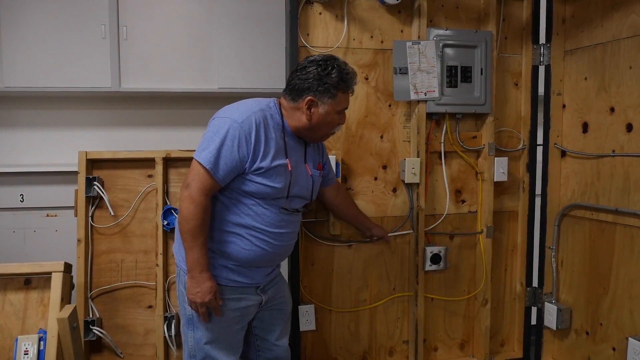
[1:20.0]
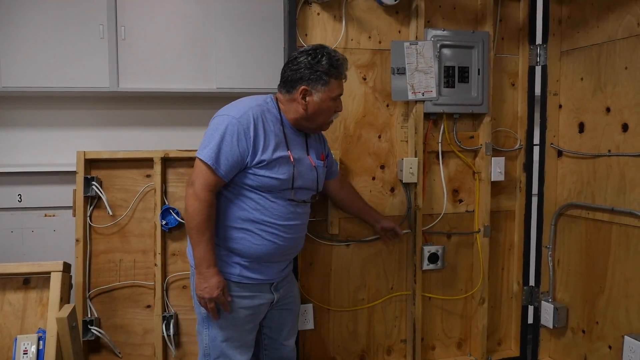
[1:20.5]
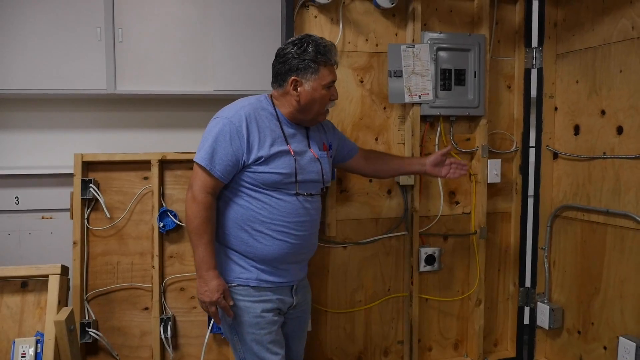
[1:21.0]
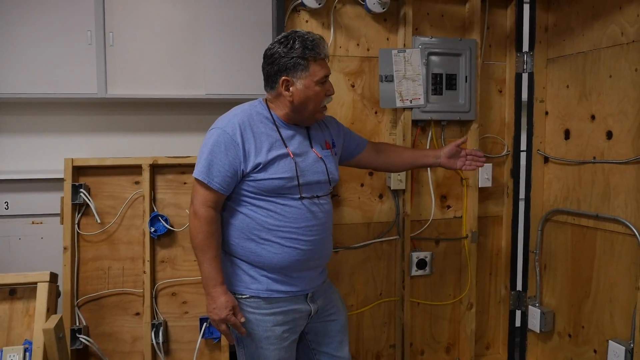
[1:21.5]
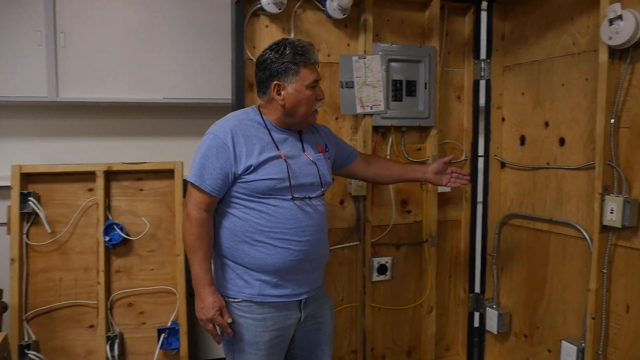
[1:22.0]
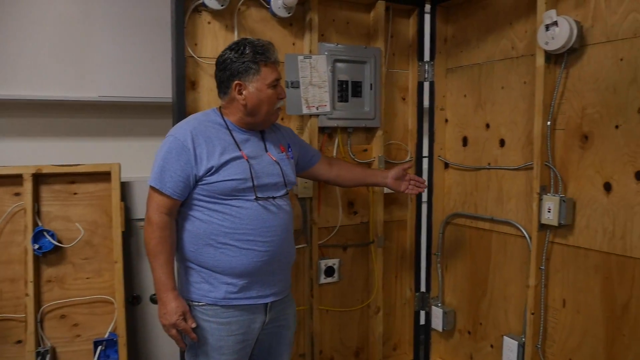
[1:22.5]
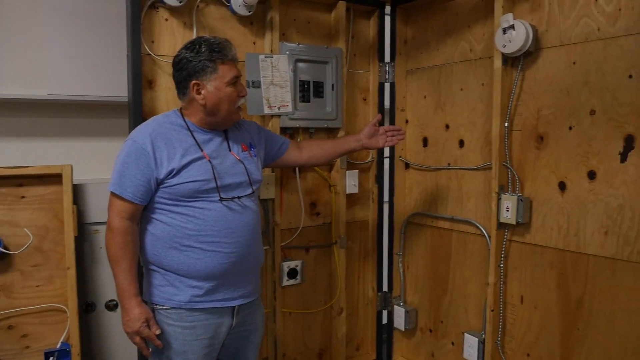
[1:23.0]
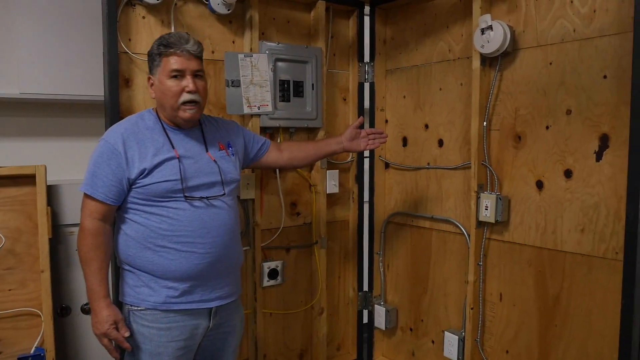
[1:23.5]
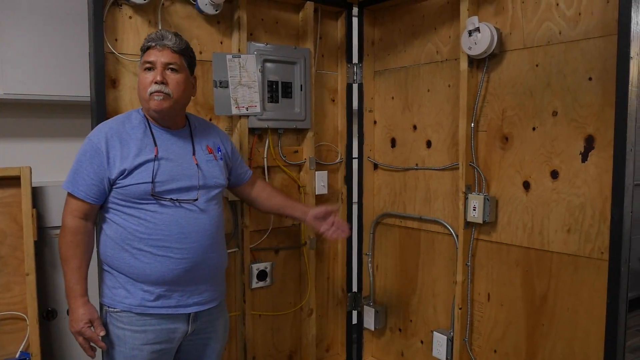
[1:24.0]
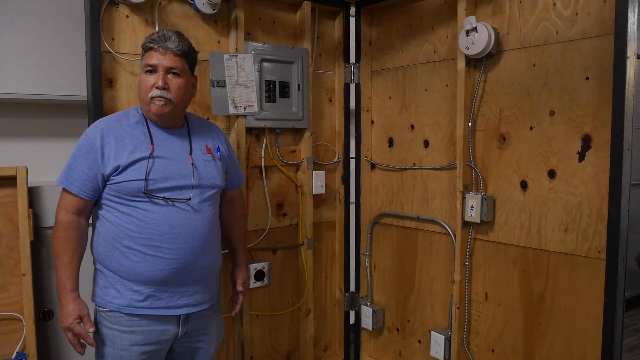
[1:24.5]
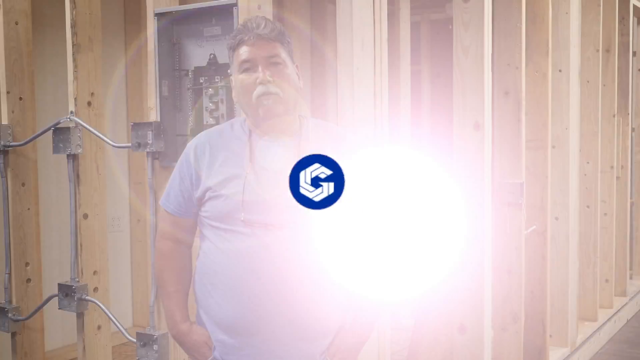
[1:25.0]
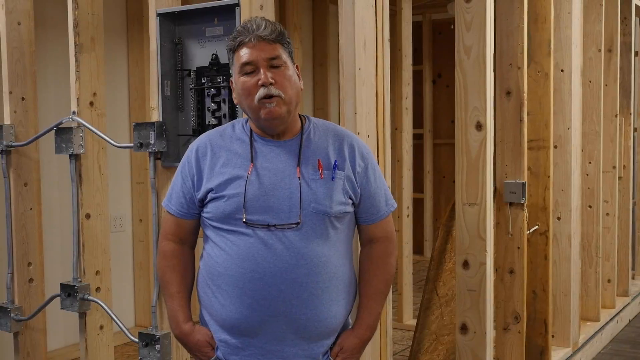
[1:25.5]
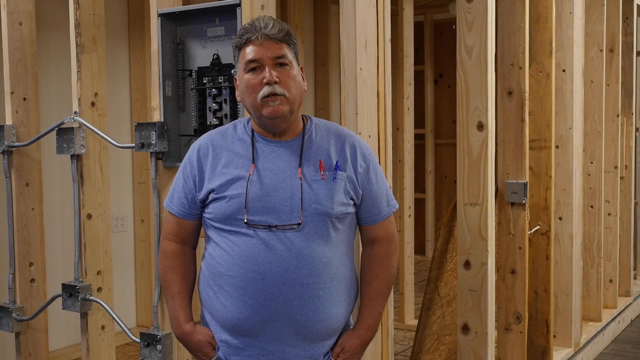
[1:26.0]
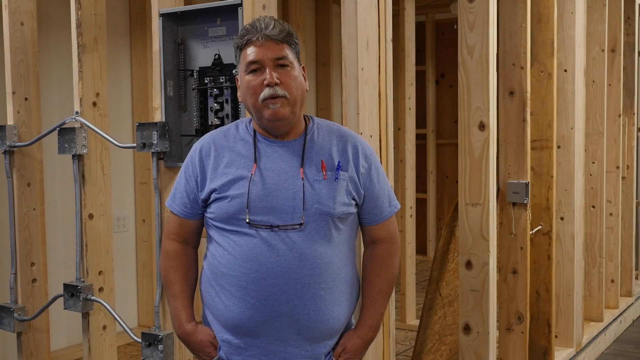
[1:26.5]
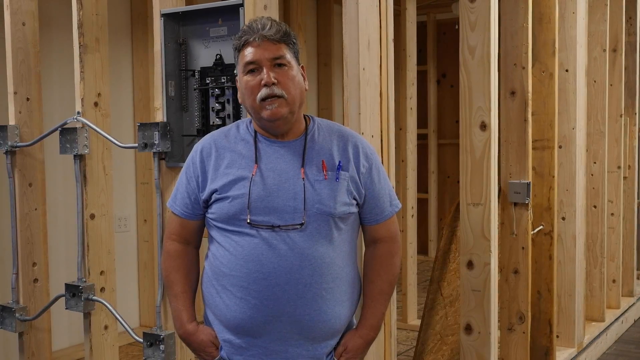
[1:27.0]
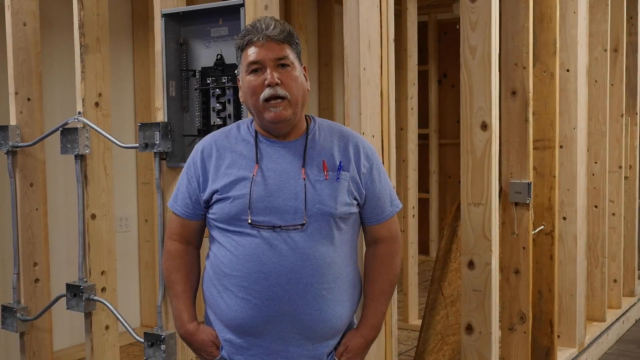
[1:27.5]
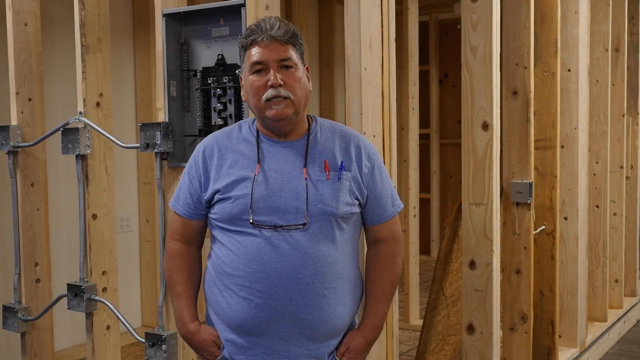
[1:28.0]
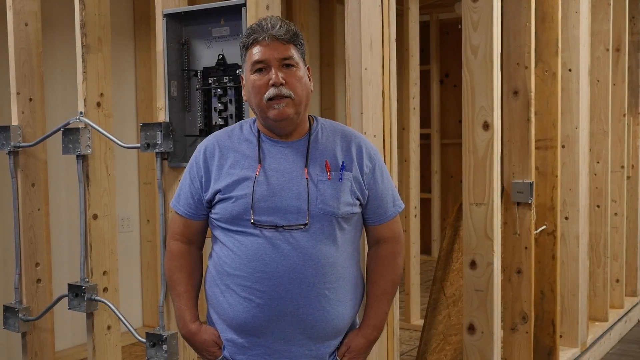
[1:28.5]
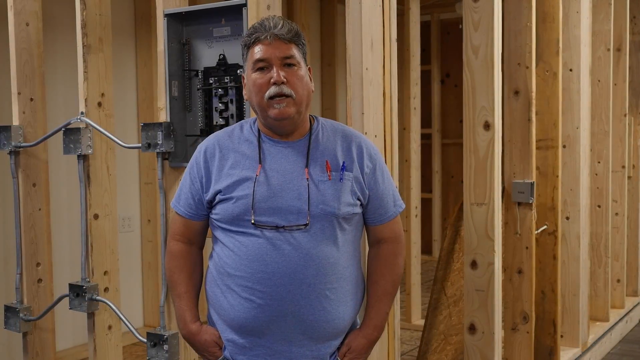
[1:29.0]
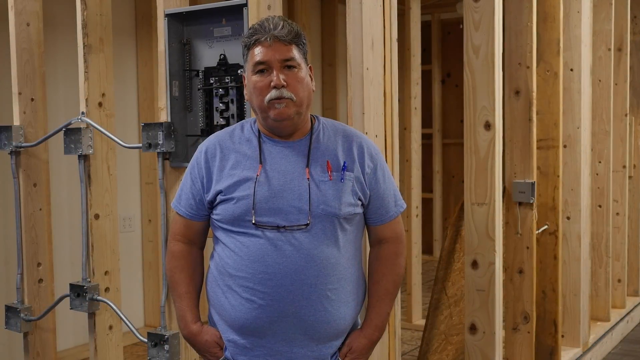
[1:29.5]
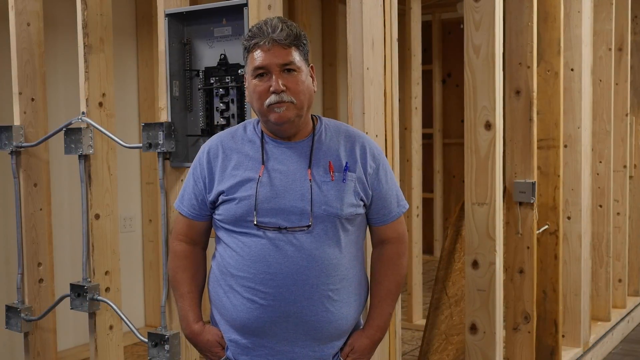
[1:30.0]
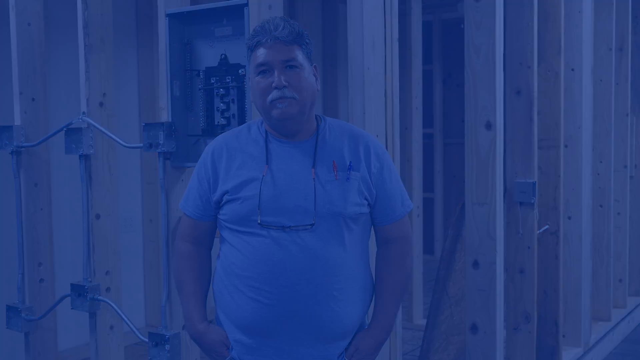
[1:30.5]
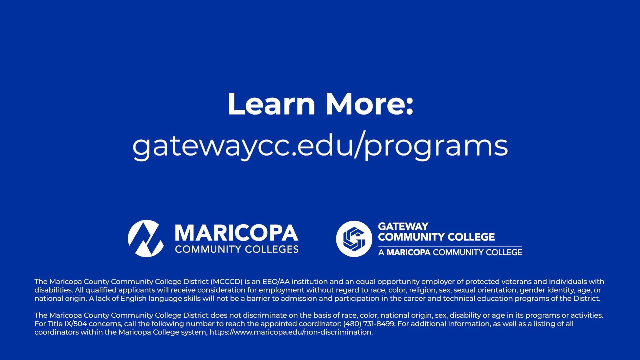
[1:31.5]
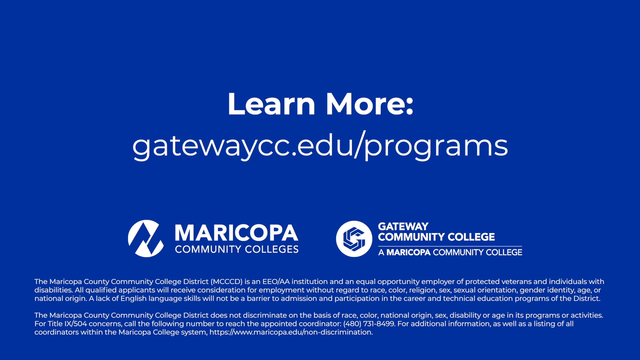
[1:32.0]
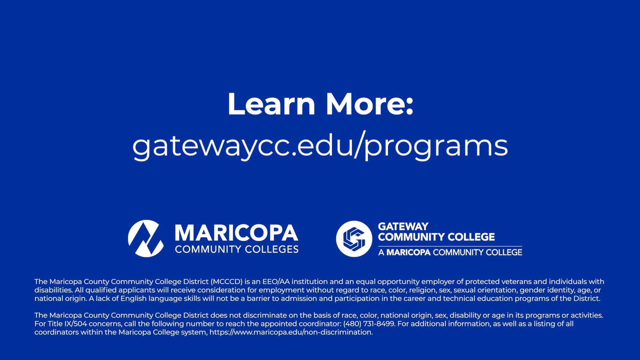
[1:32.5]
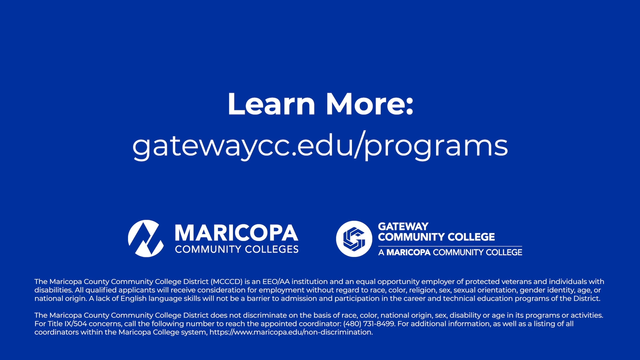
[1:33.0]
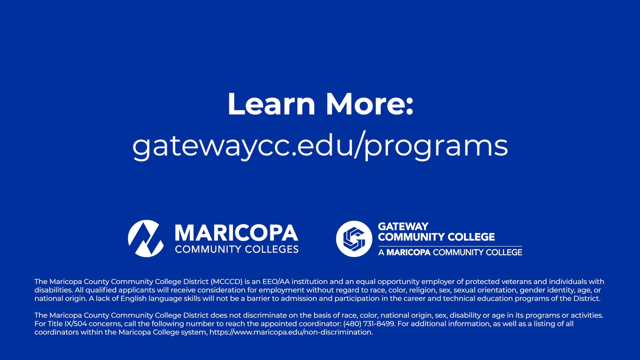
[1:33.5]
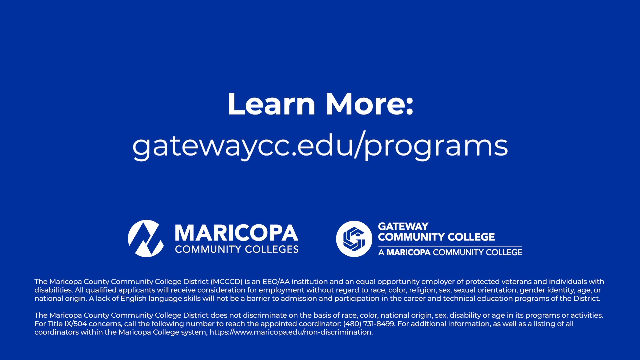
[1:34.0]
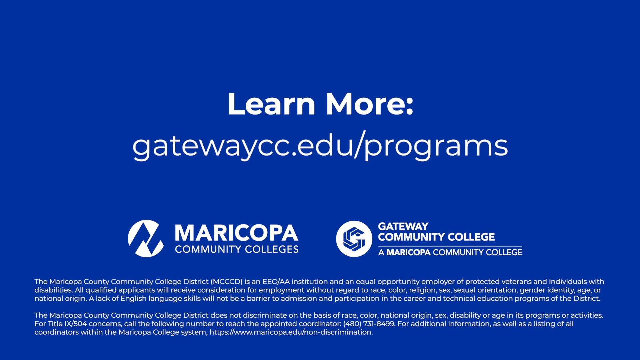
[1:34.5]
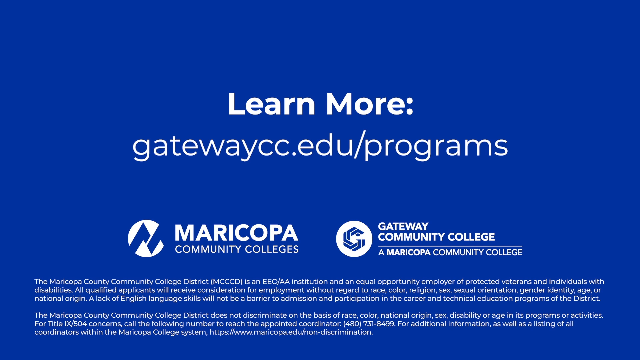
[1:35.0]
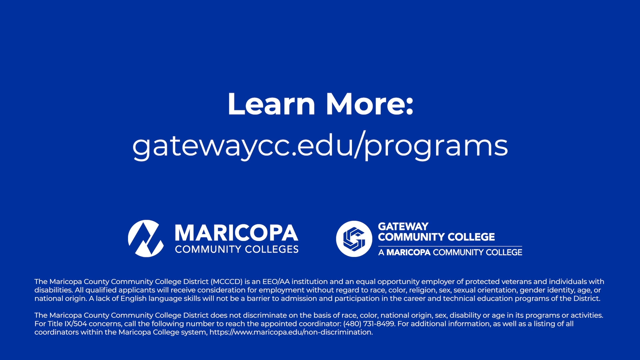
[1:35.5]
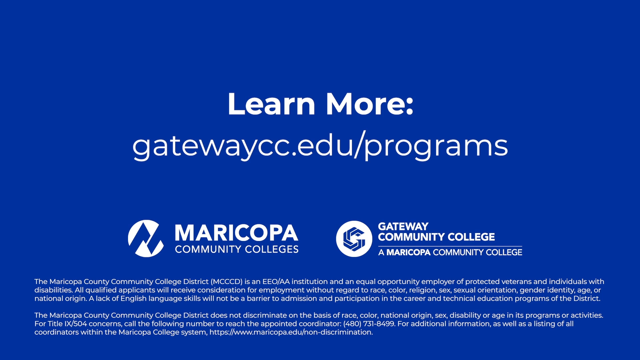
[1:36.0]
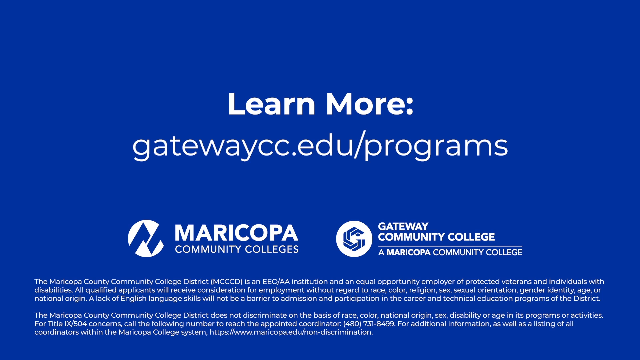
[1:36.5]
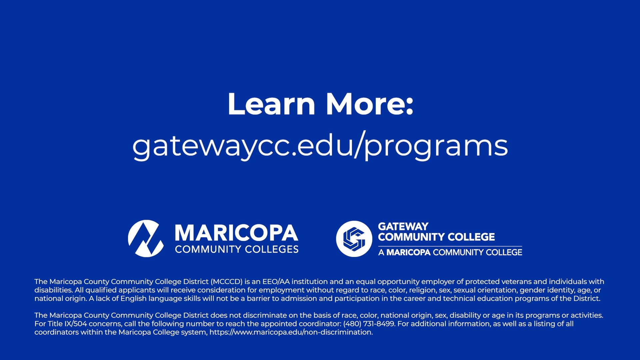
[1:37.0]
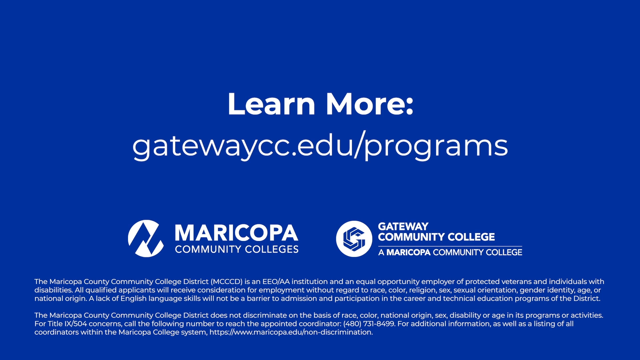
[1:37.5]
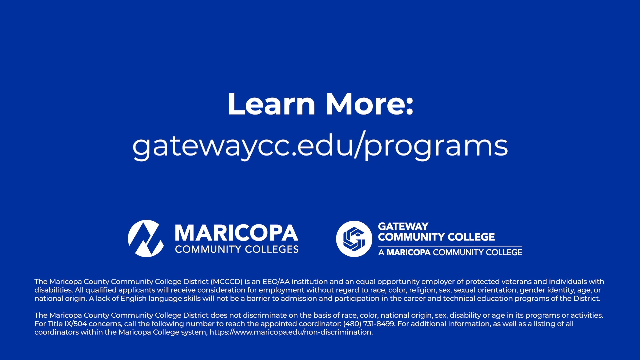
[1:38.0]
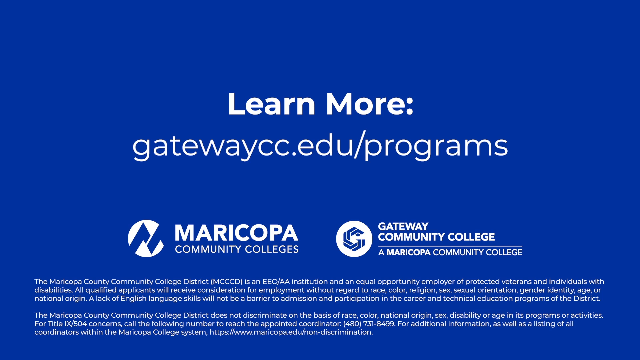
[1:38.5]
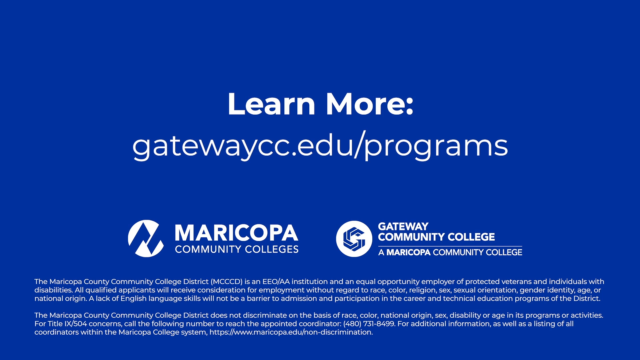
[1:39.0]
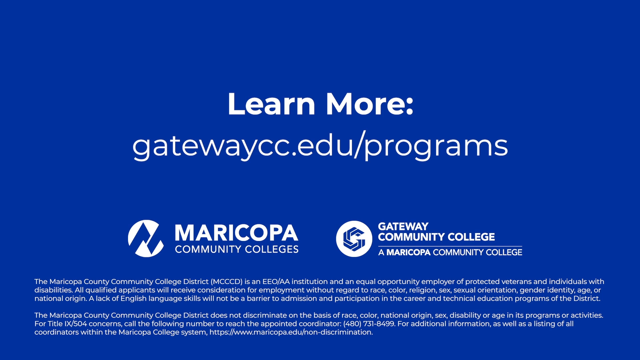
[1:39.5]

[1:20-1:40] The video focuses on the contents of the room, where most of the material is wood. Wires run through the boards, the wall and parts of the wood, and electrical appliances are attached on the walls of the boards: sockets, main switches, and bare cables pinned on the wall. The man points at some appliances as he explains. The video ends with the man standing upright, describing, followed by a green background with the headline "learn more", a website address, a company logo reading Maricopa, and the name Gateway Community College.